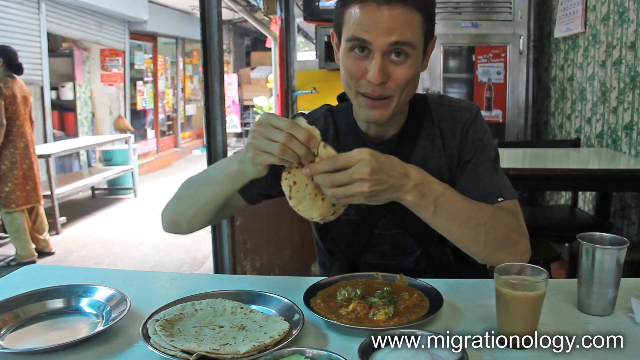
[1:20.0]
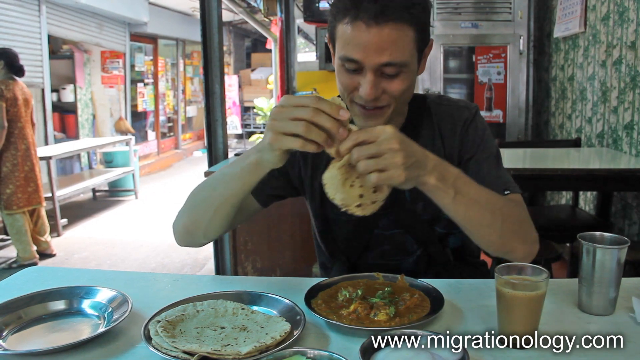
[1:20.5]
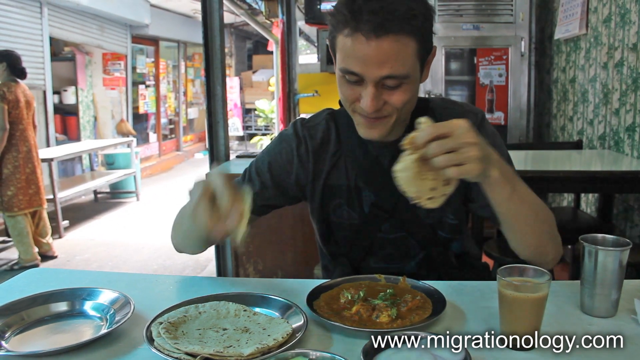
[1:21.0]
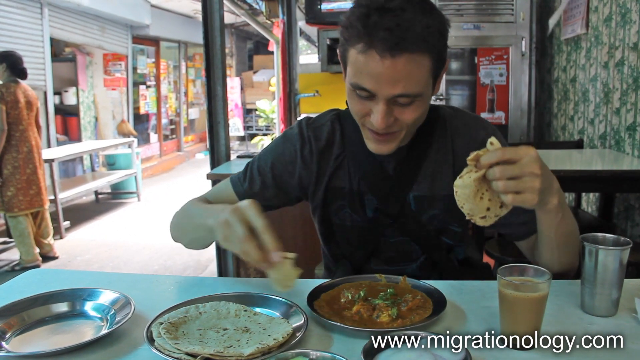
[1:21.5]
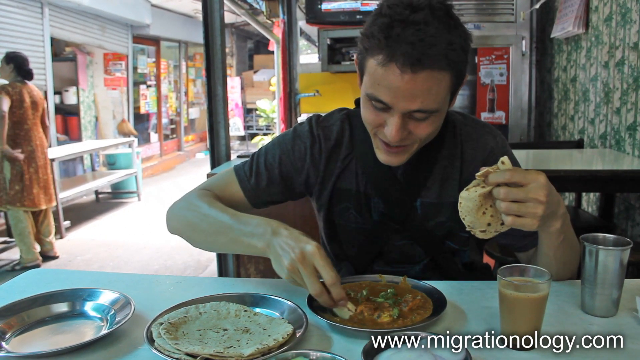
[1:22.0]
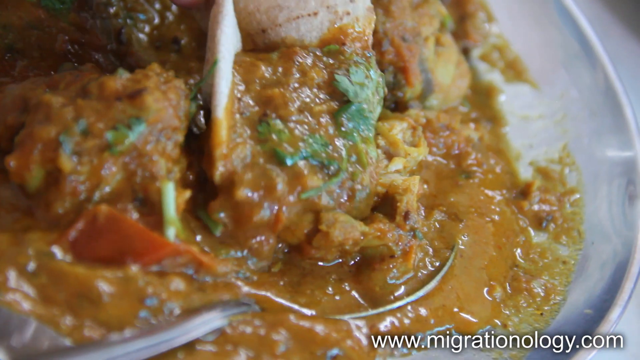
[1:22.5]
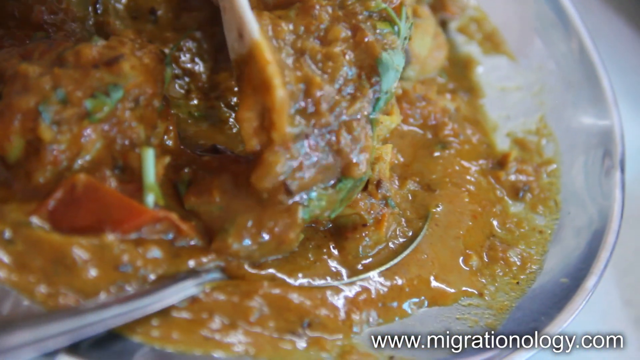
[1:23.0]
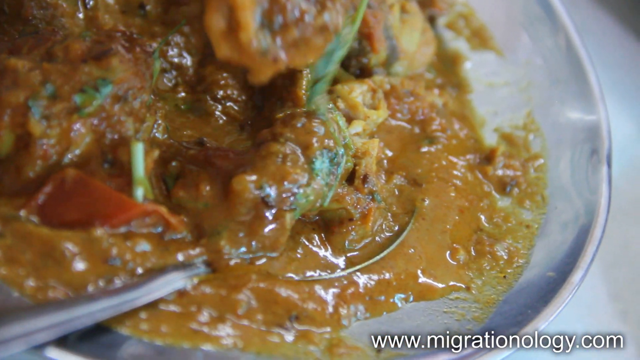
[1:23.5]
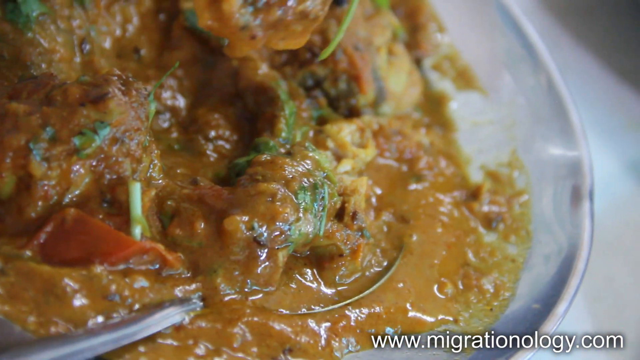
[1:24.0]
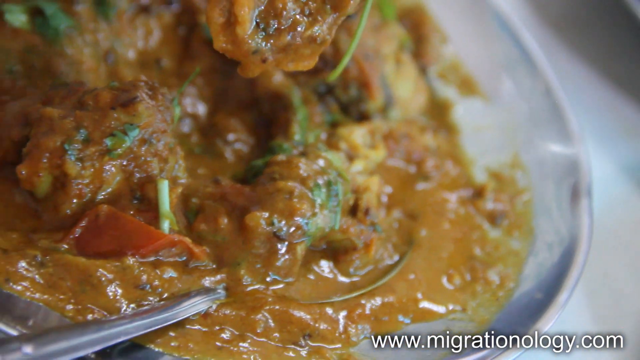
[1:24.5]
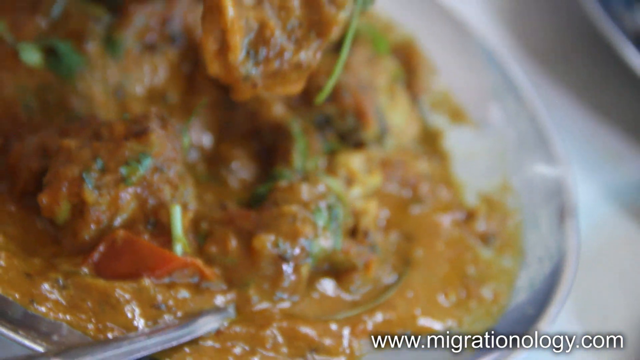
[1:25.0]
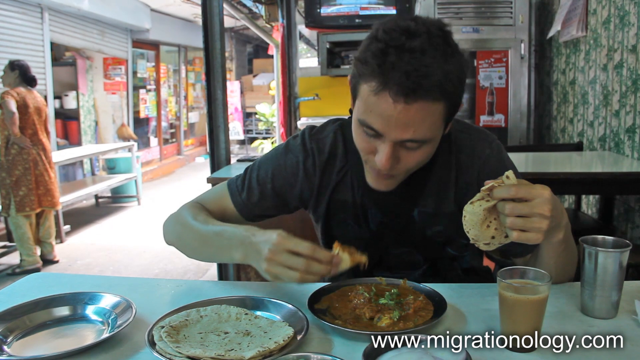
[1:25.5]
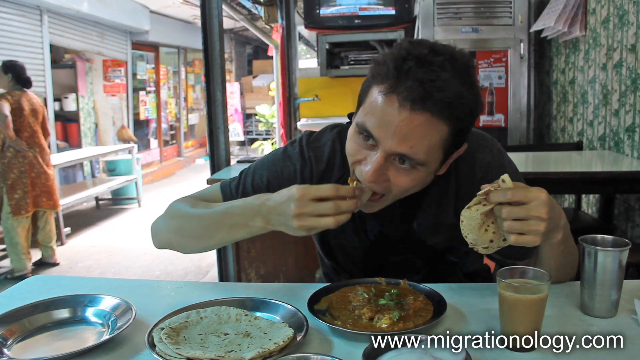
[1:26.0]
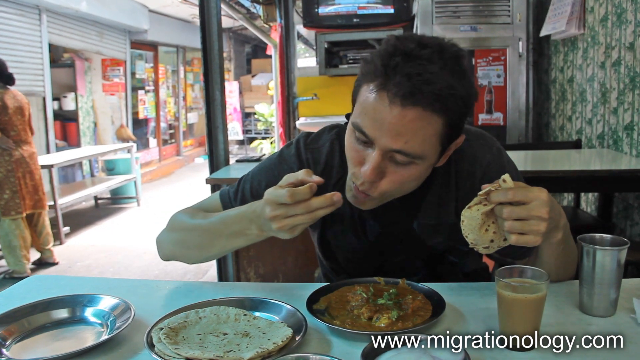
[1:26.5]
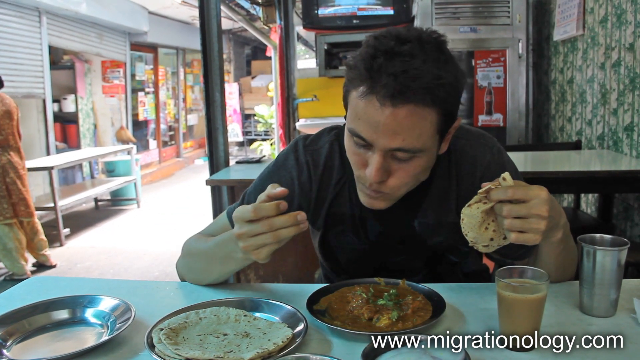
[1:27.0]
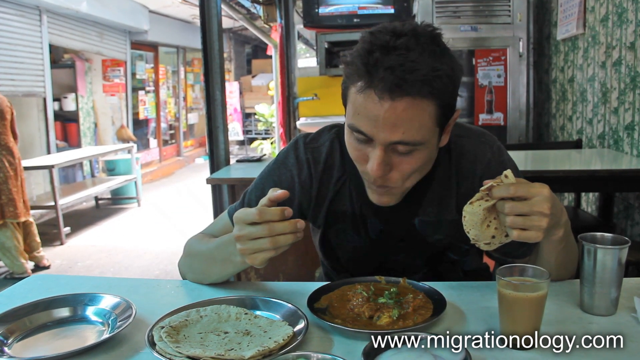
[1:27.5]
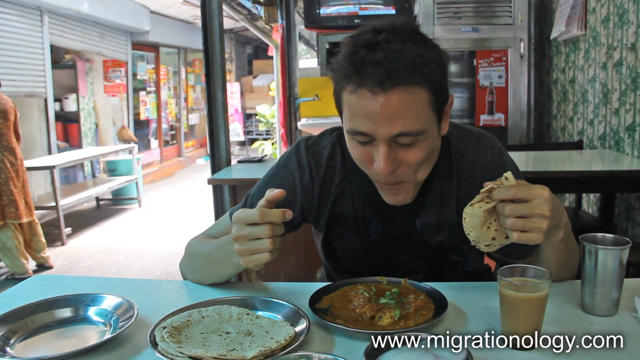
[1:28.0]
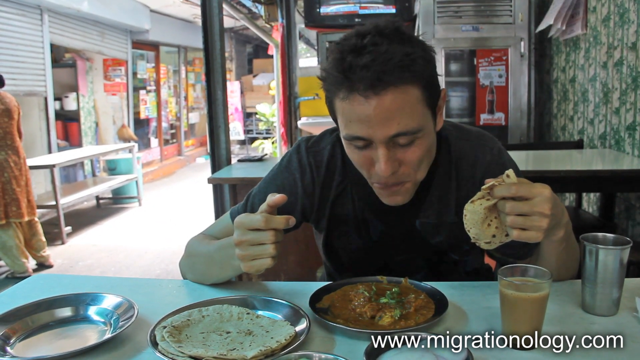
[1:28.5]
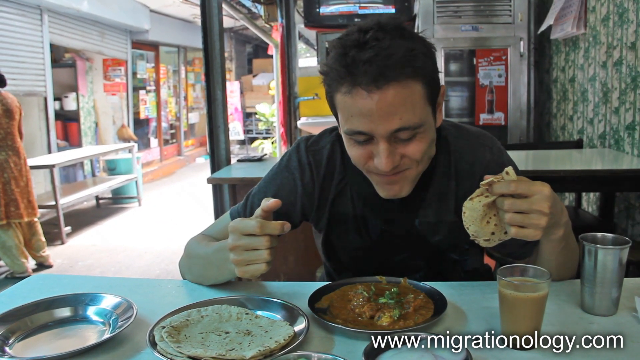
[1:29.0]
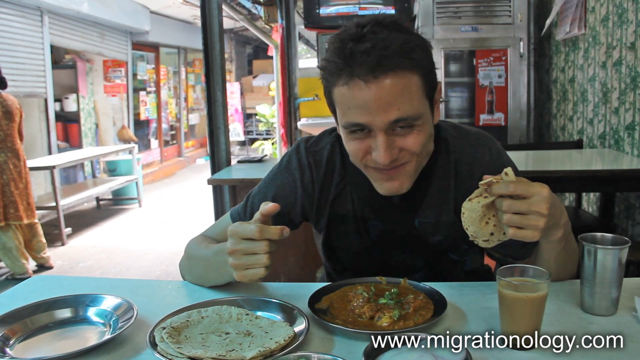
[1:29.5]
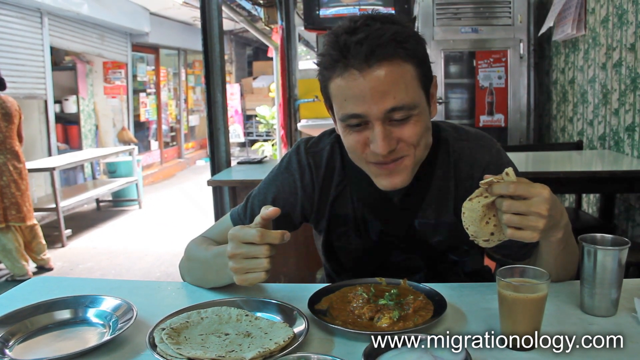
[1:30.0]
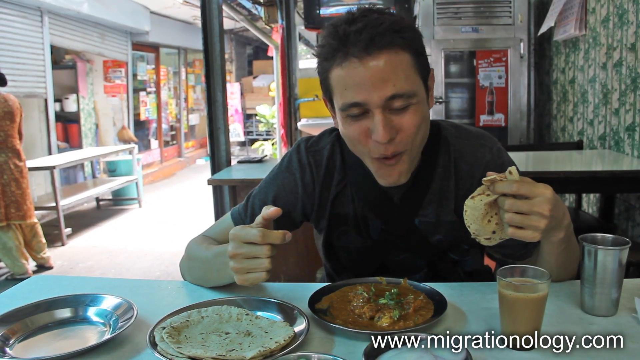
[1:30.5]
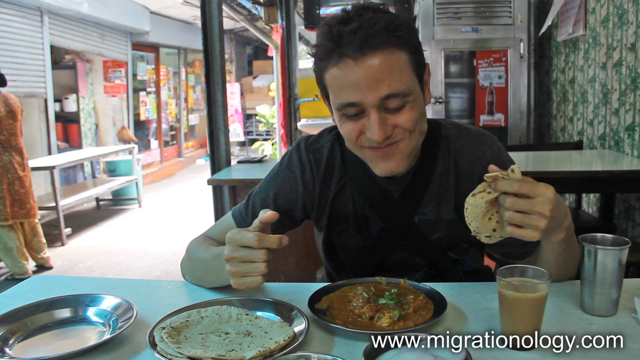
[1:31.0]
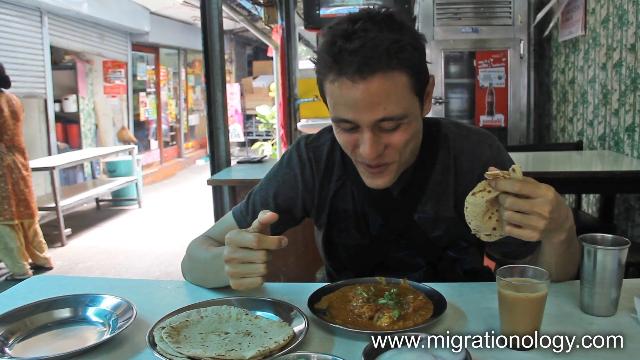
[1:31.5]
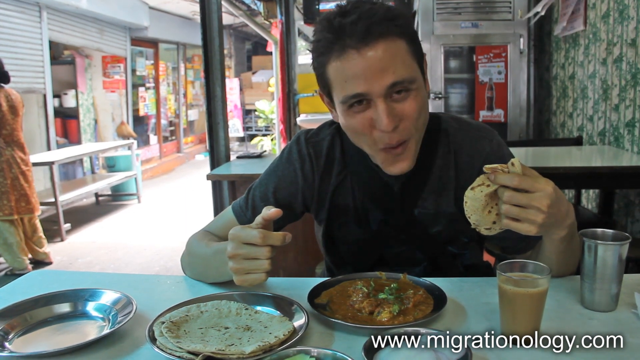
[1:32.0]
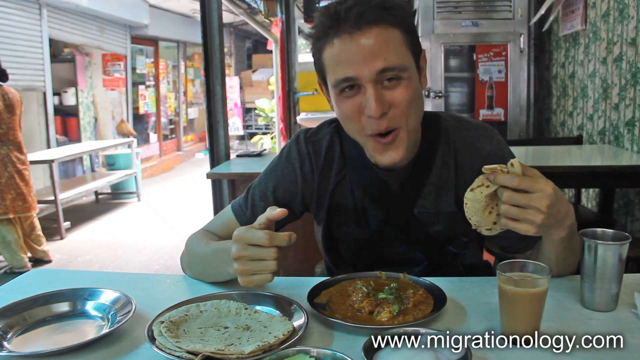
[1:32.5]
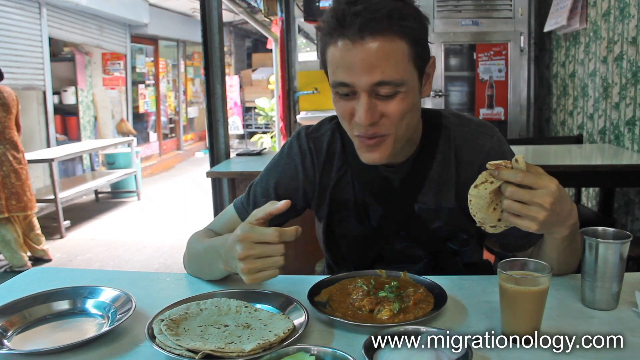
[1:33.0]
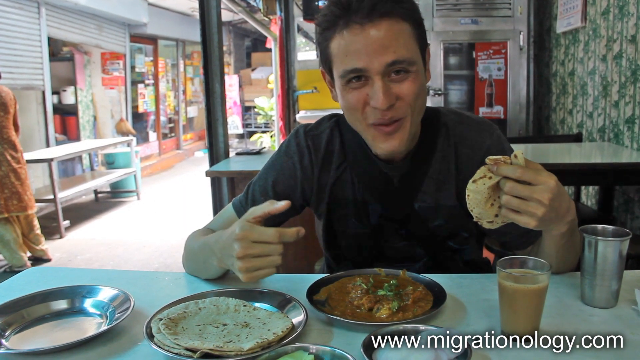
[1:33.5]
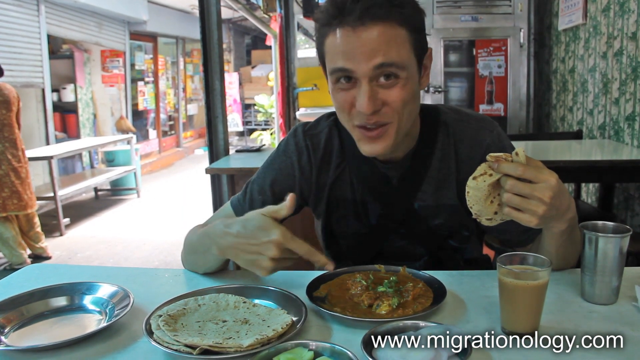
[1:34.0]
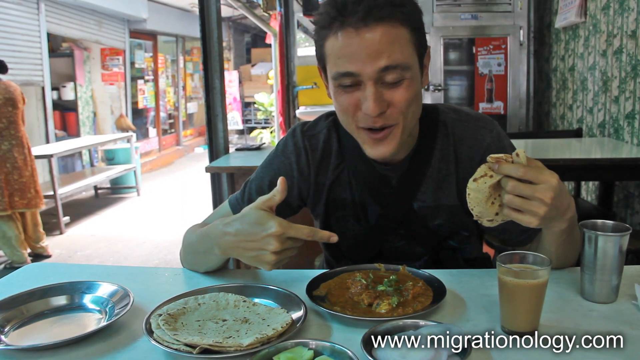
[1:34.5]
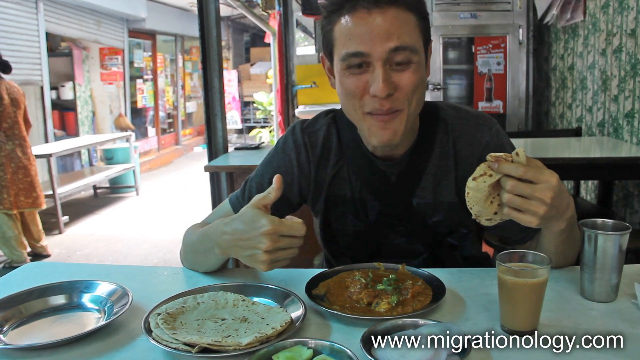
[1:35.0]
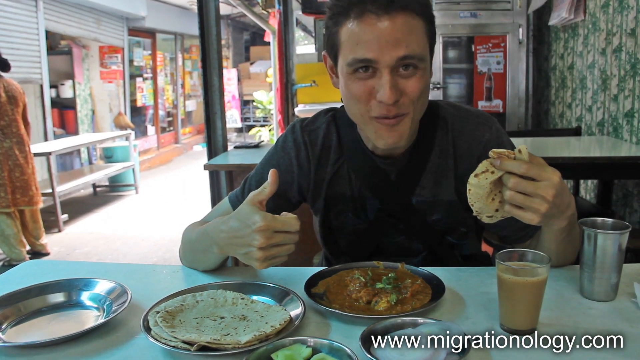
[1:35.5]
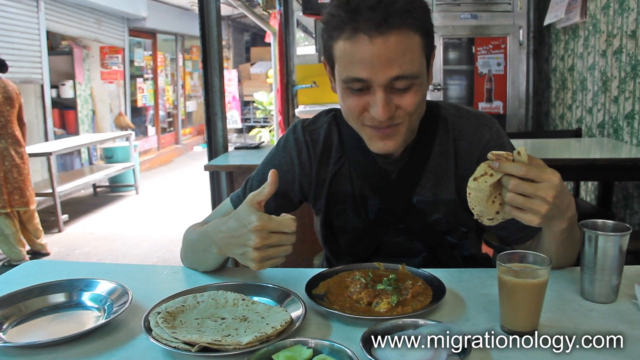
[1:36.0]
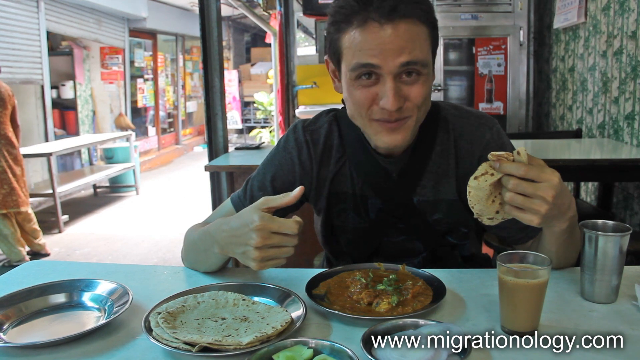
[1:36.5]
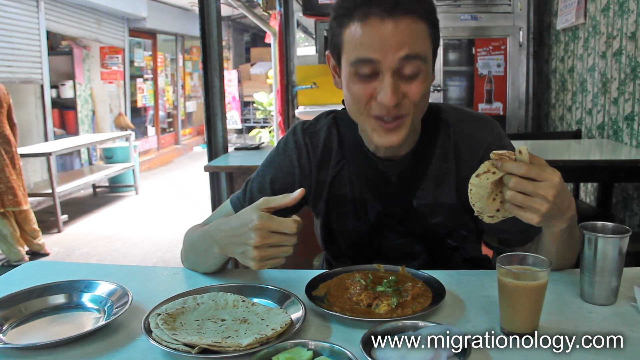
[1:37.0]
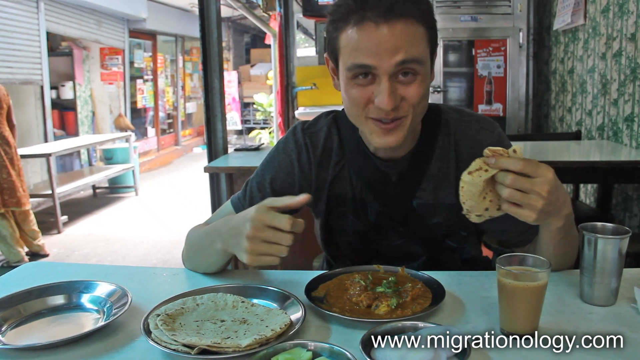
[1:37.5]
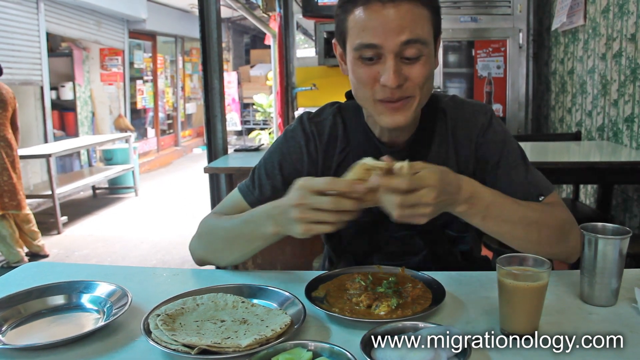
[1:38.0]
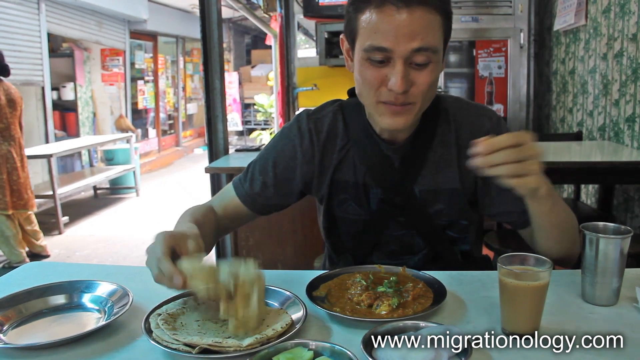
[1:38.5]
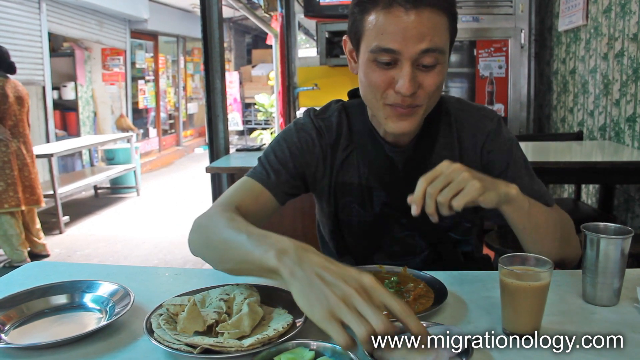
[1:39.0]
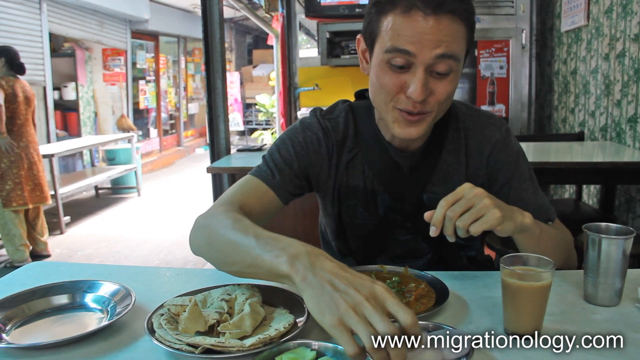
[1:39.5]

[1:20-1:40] The man rips off some bread, scoops up chicken masala with it, and puts it in his mouth. He looks very expressive, points down at the food, and seems very pleased, smiling and almost laughing. He then grabs one of the garnishes, which looks like onion, and seems about to eat it. A close-up shows him dipping his pita in the chicken masala.